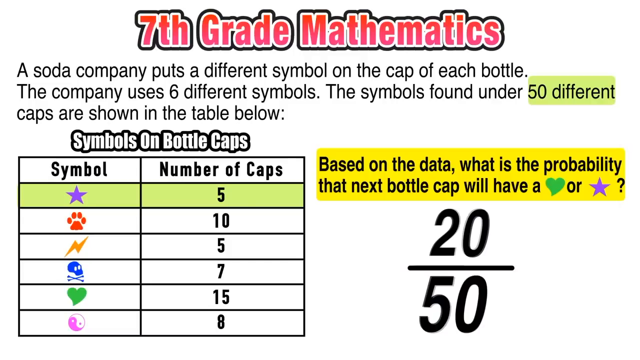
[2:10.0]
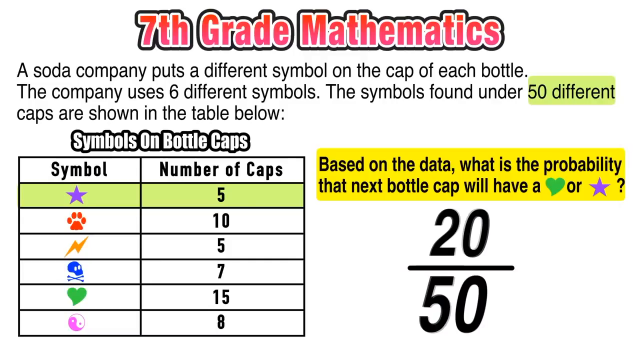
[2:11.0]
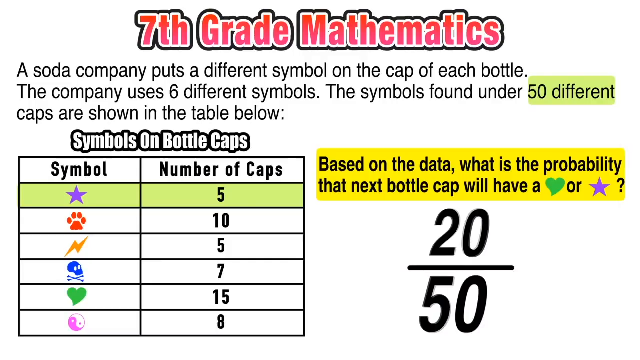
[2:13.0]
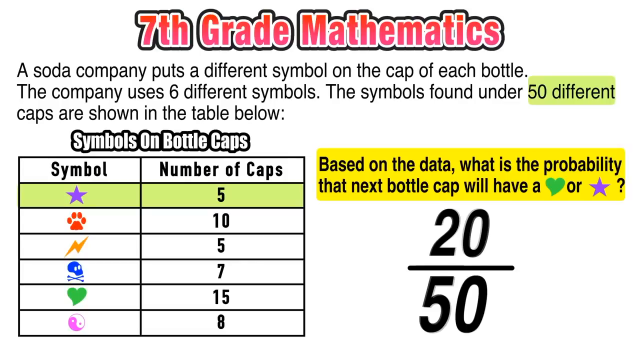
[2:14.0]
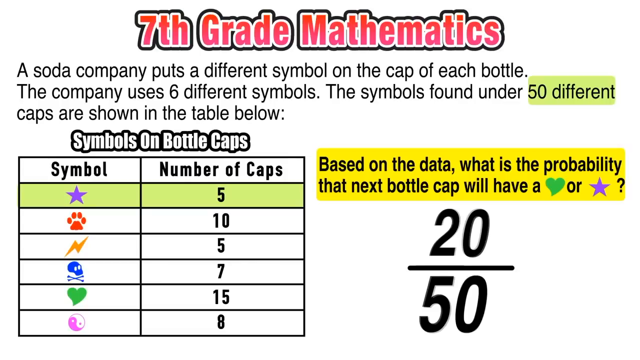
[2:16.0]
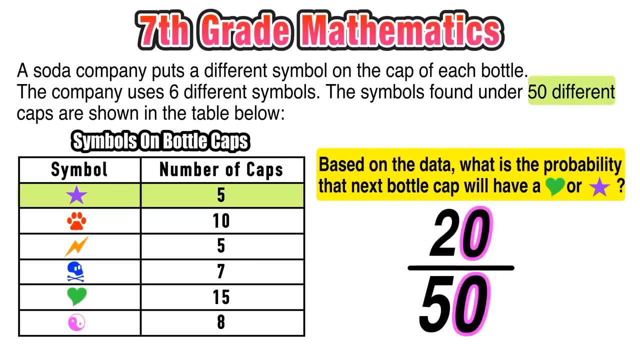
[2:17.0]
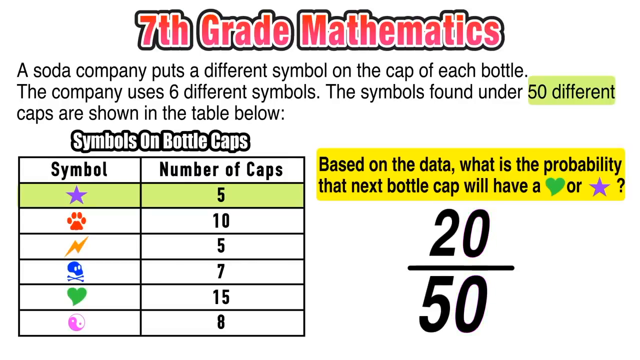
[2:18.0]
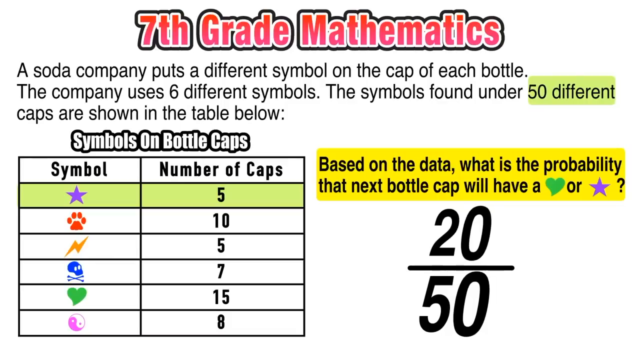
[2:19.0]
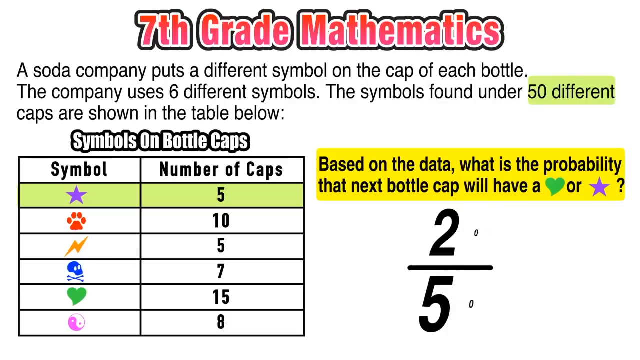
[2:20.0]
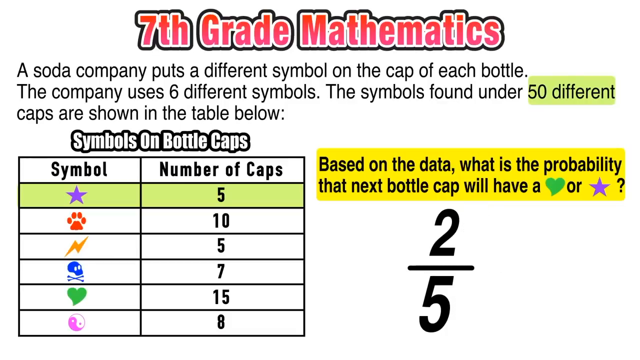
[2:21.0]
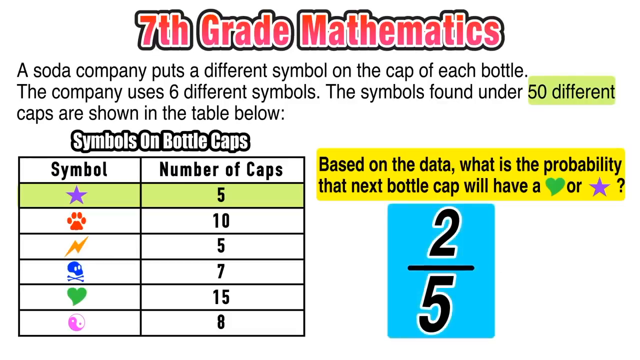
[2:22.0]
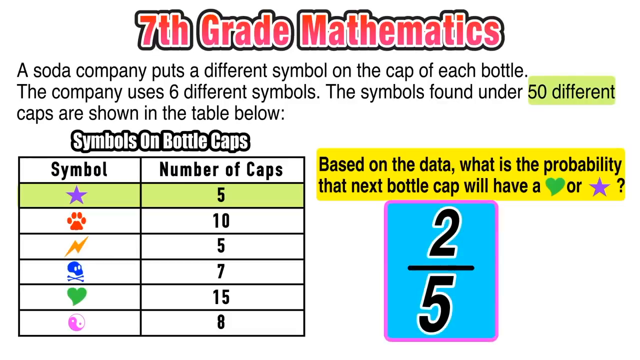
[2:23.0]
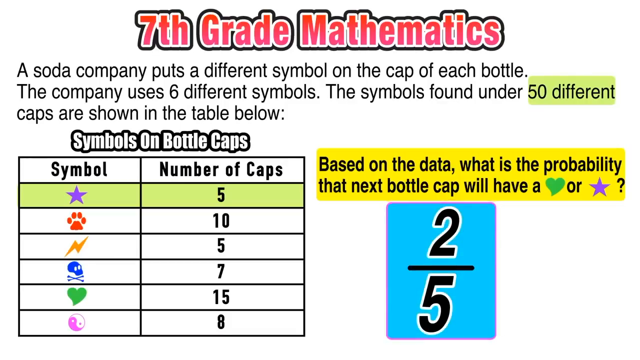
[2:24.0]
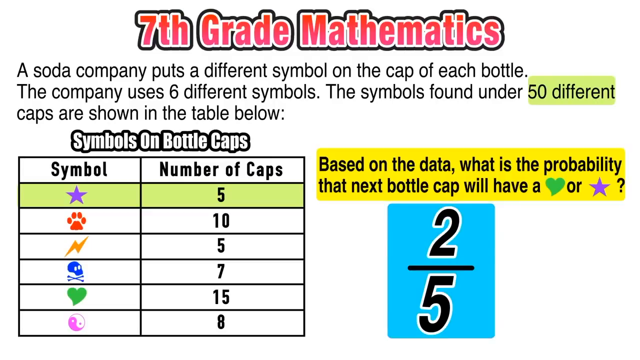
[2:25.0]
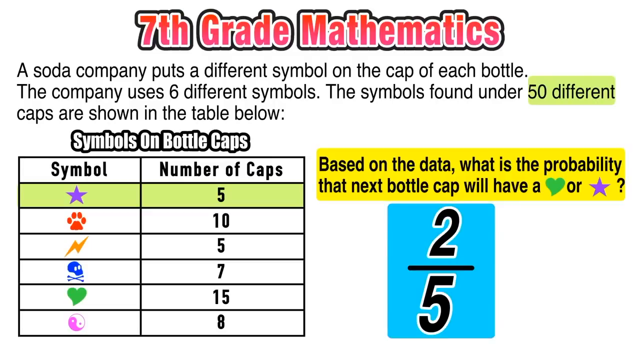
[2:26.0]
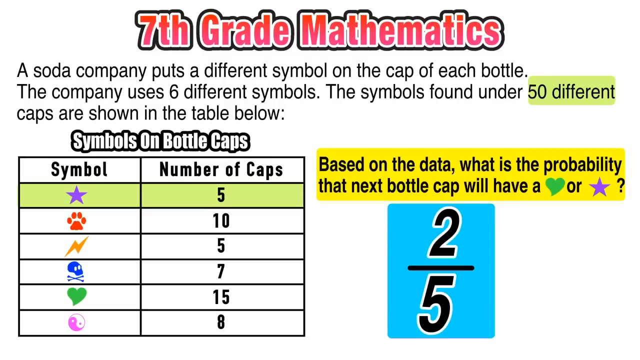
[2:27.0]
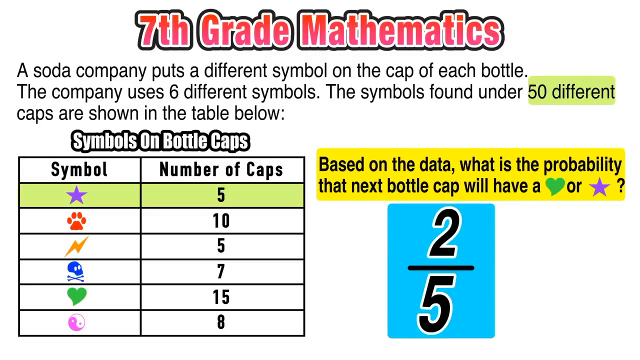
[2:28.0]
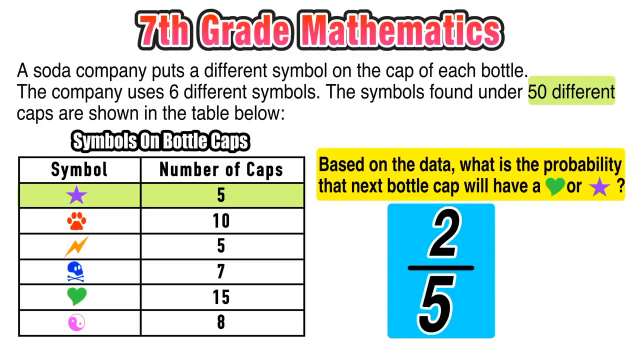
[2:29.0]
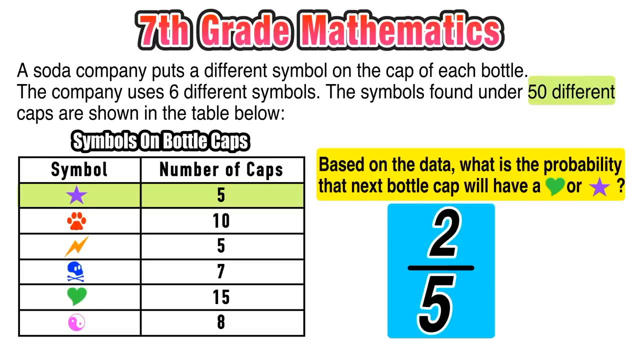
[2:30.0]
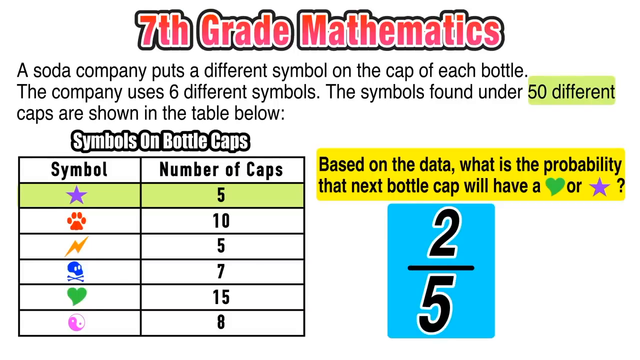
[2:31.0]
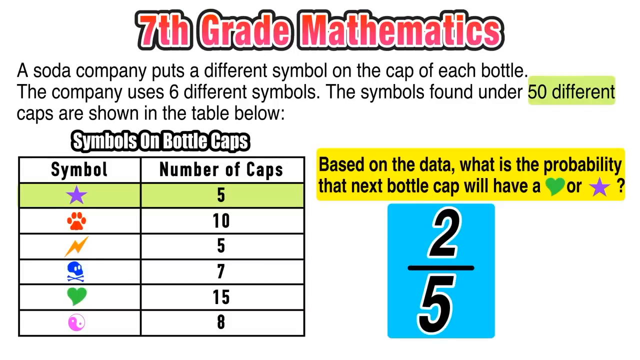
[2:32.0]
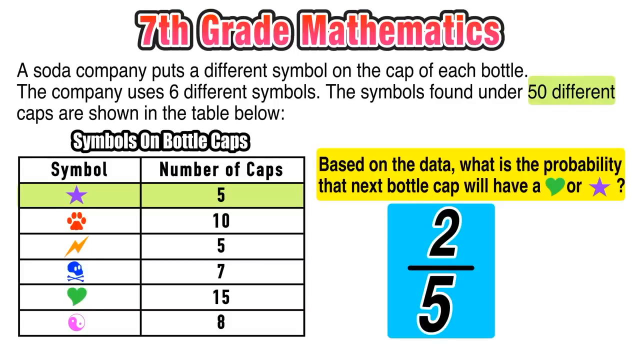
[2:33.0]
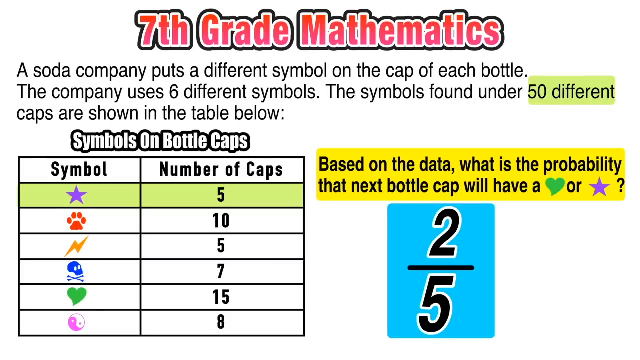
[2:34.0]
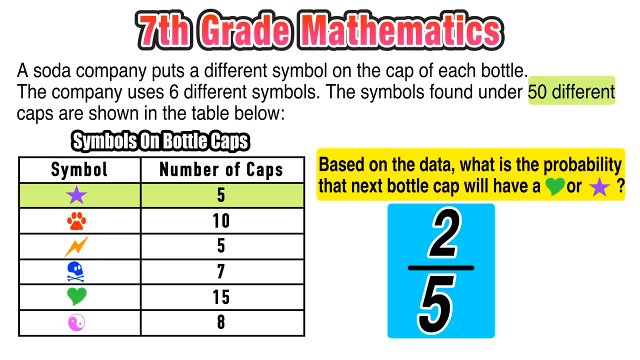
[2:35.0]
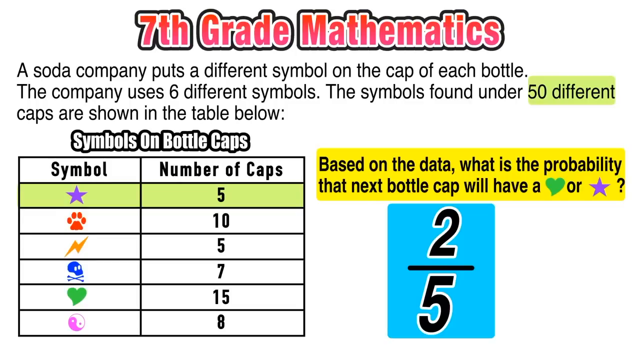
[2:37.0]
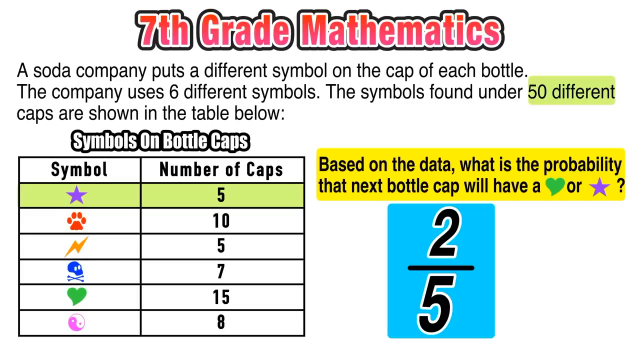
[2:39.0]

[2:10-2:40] "Seventh grade mathematics" is written in red. The paragraph below consists of three lines, and at the end of the second line, on the right side, "50 different" is shaded in green. At the bottom left there is a diagram of symbols on bottle caps, with a symbol section and a number of caps section. The symbols are a star, a footprint, a lightning bolt, a skeleton and a heart, and the numbers of caps are 5, 10, 5, 7 and 15. At the bottom right, 20 over 50 appears in bold. The red zeros change to pink and disappear, leaving 2 over 5, which becomes highlighted in blue. Different colors appear throughout this part, the background remains white, and the words scramble and then come back.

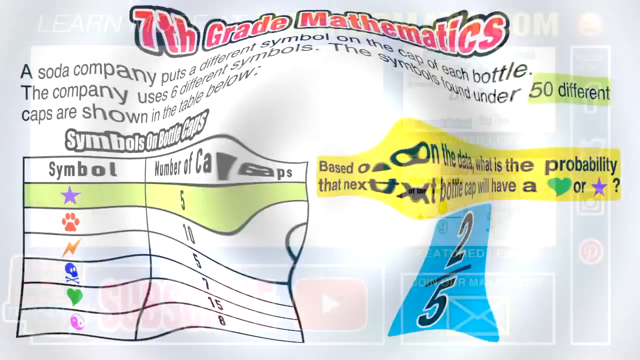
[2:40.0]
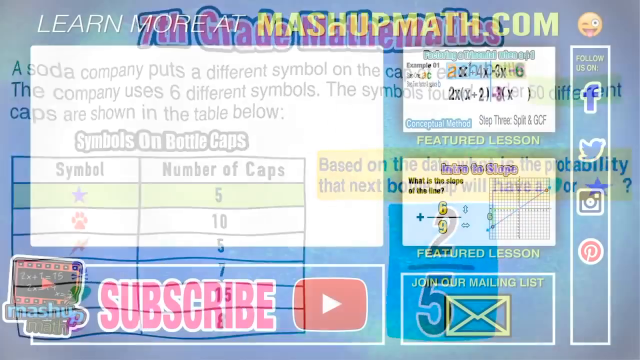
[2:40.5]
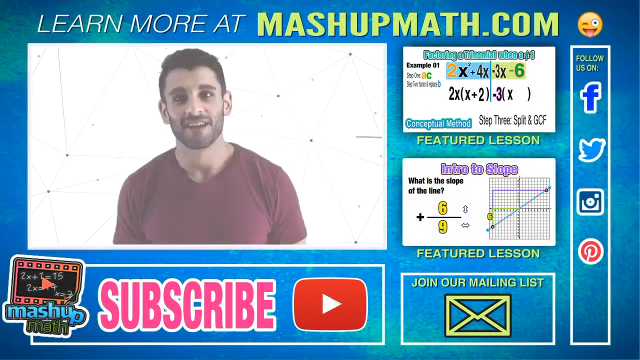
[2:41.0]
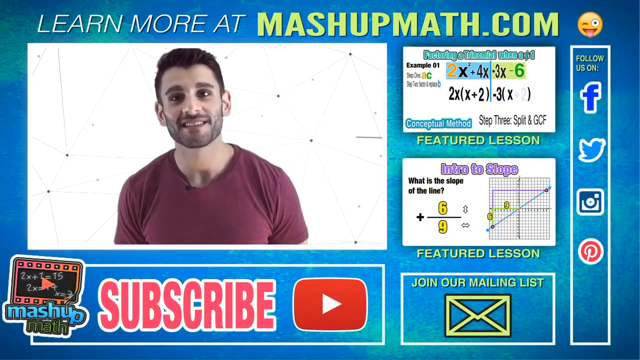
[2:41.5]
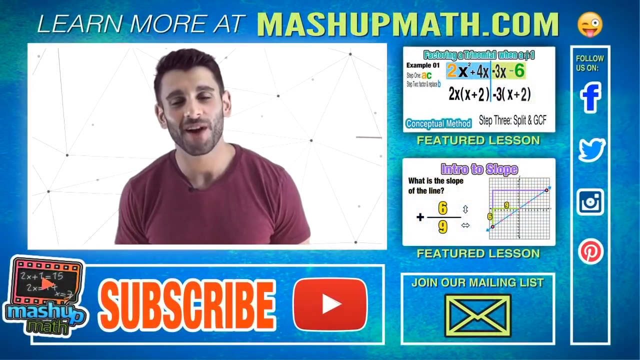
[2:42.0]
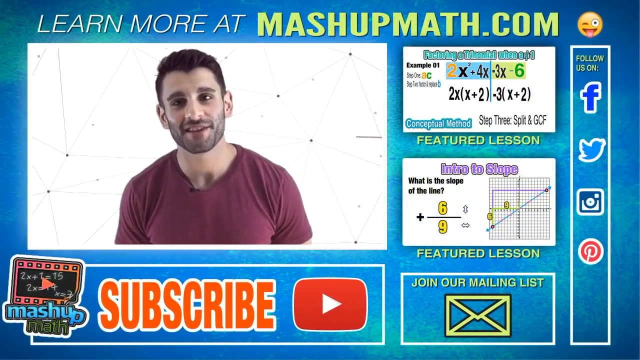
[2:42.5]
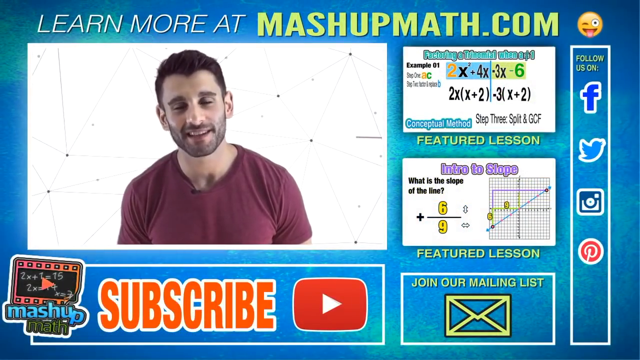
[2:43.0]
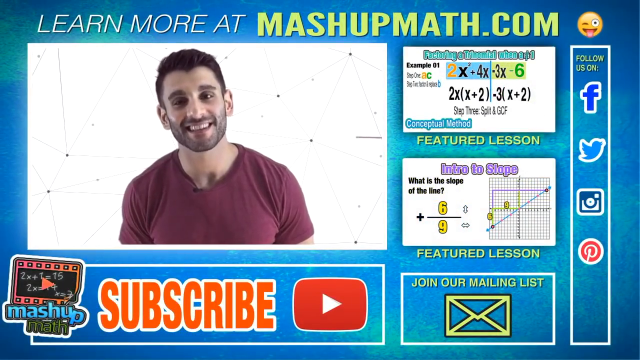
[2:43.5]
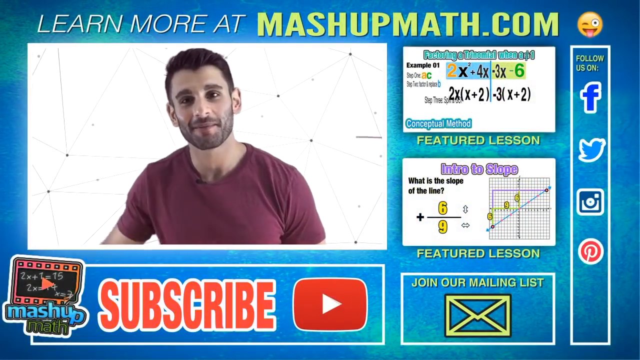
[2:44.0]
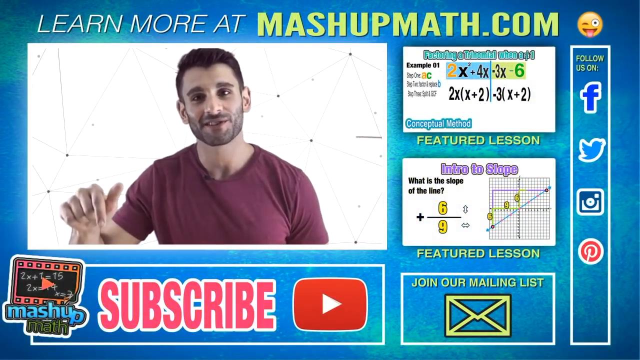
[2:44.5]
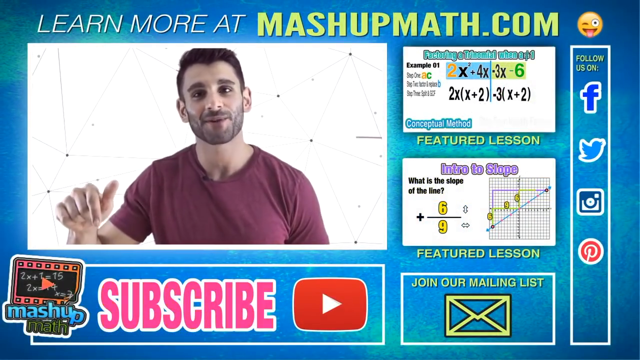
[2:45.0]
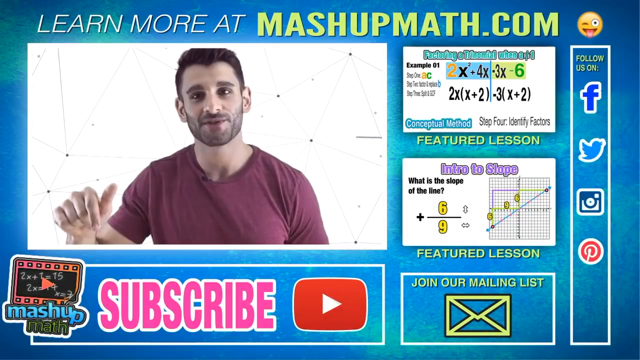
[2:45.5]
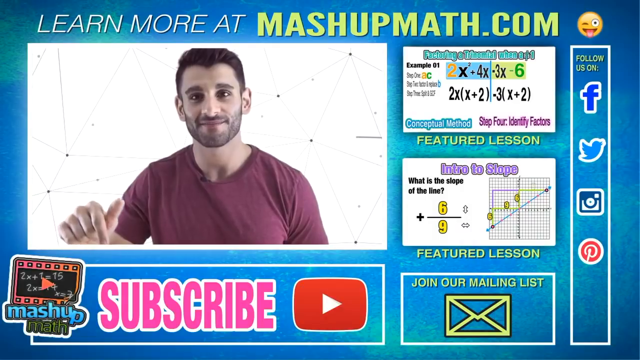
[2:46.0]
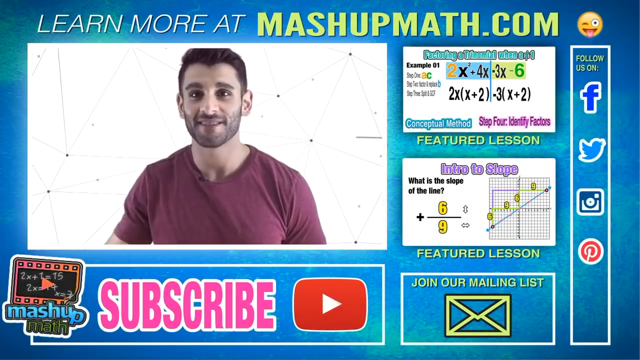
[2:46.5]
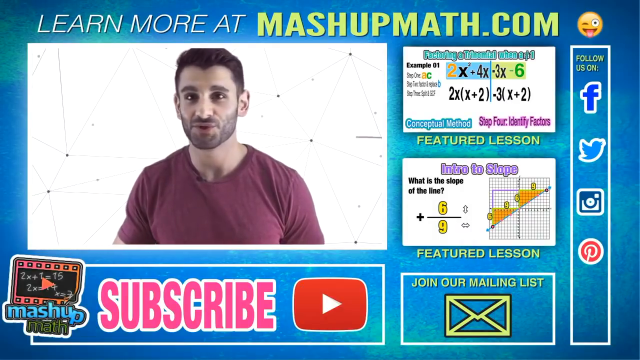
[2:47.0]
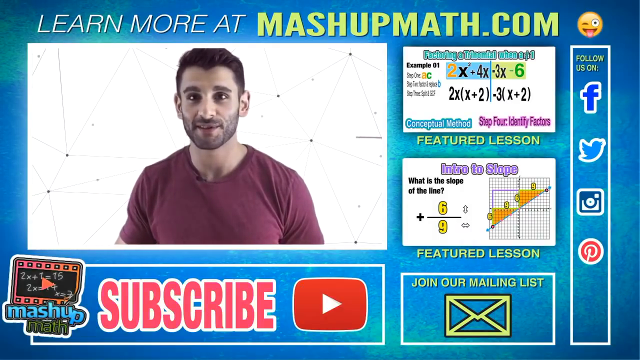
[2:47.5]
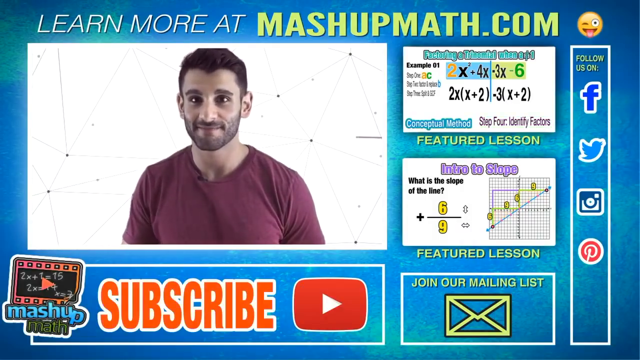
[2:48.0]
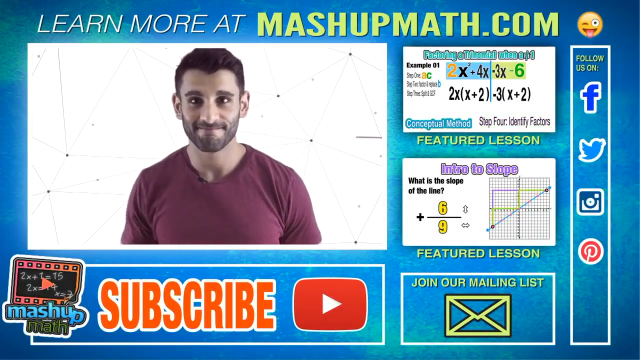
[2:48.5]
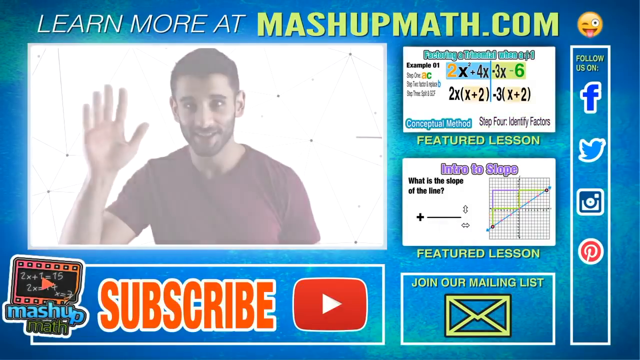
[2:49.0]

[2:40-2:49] At the bottom, text reads "learn more at mashupmath.com", alongside an emoji with one eye wide open and one eye closed with its tongue out. A Subscribe button is at the bottom of the screen, and at the bottom right it says "join our mailing list" next to a yellow picture of an envelope. The background is blue. A man wearing a maroon T-shirt appears briefly in a caption, speaking, and then disappears, while the white caption remains. On the far right it says "follow us on Facebook, Twitter, Pinterest, and Instagram". At the top right, different equations are shown in boxes, and at the bottom of each box is written "featured lesson". The overall background is blue, and a white caption is visible.